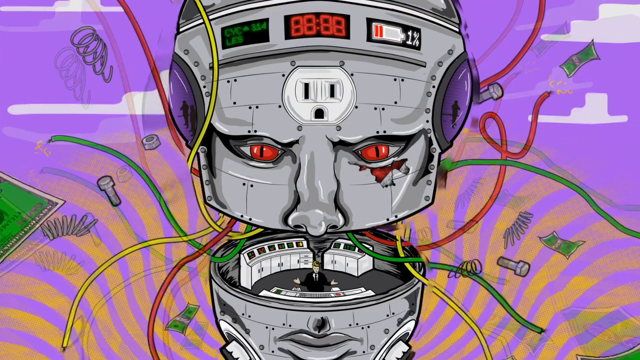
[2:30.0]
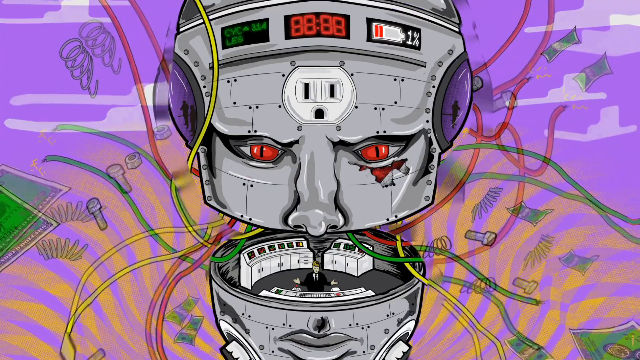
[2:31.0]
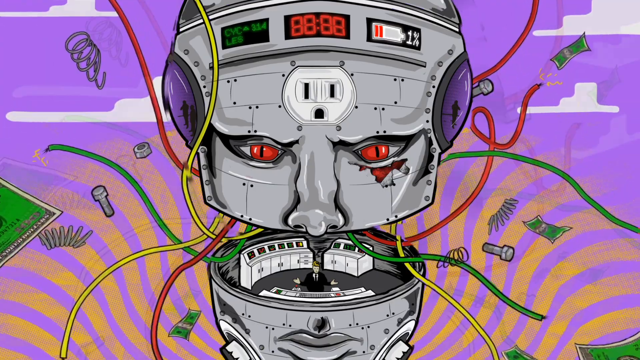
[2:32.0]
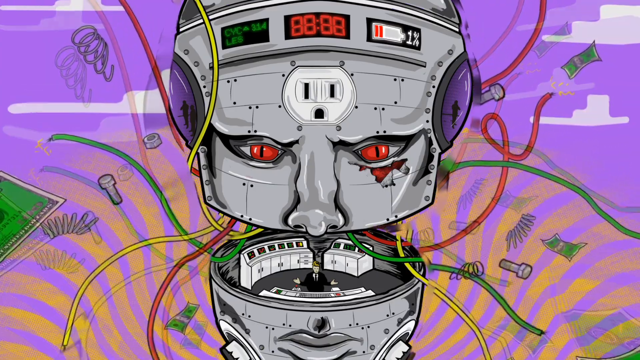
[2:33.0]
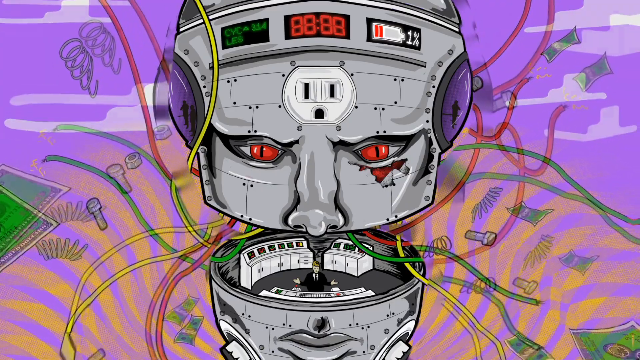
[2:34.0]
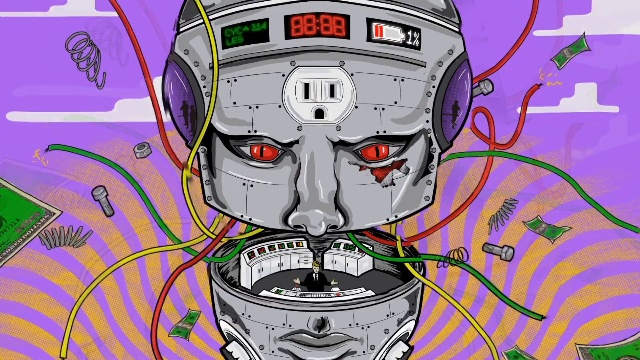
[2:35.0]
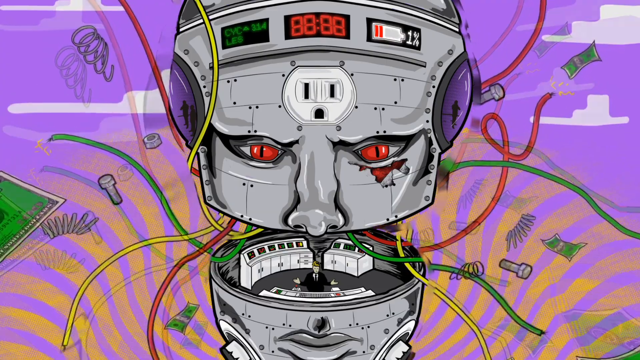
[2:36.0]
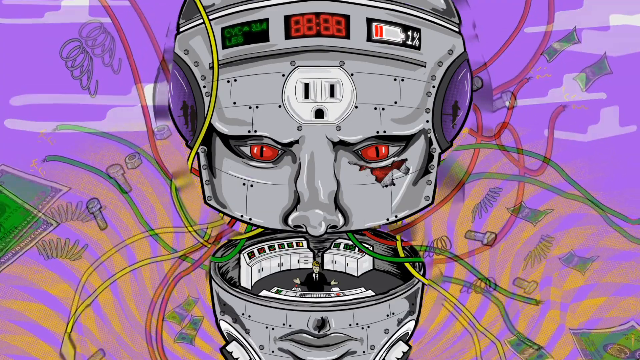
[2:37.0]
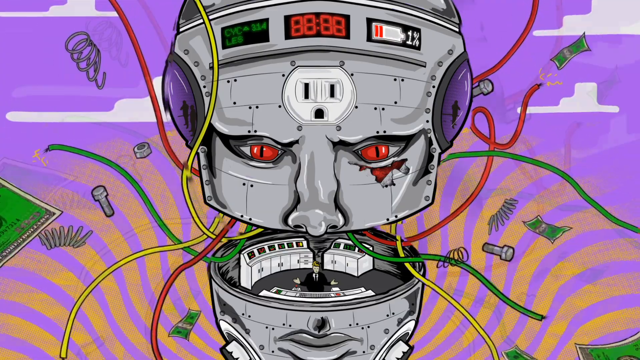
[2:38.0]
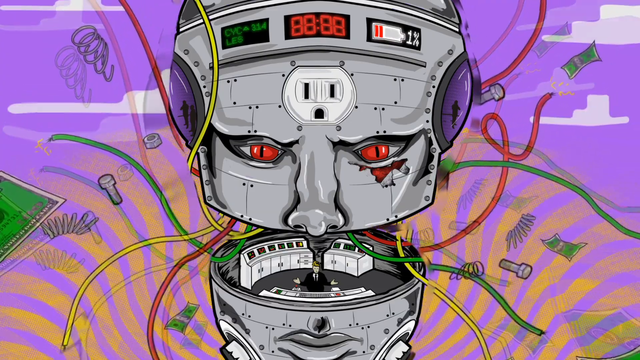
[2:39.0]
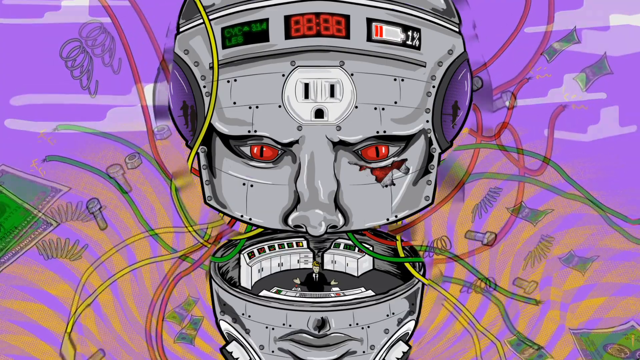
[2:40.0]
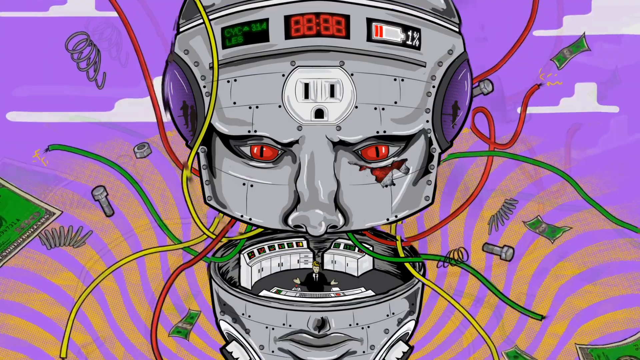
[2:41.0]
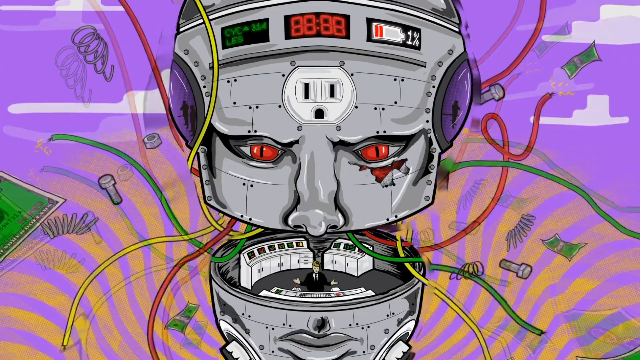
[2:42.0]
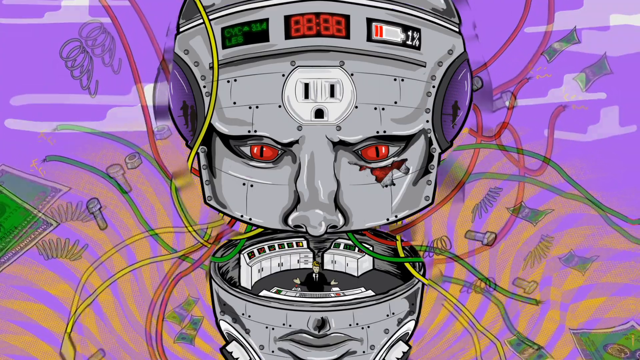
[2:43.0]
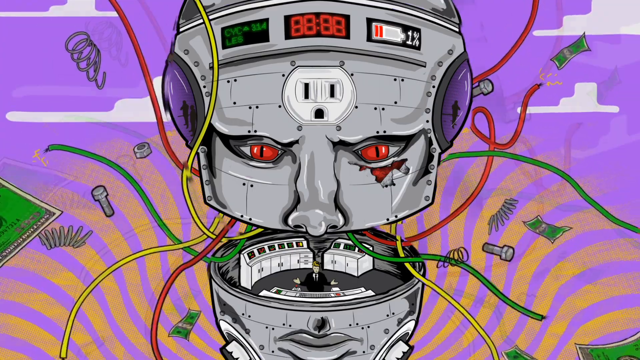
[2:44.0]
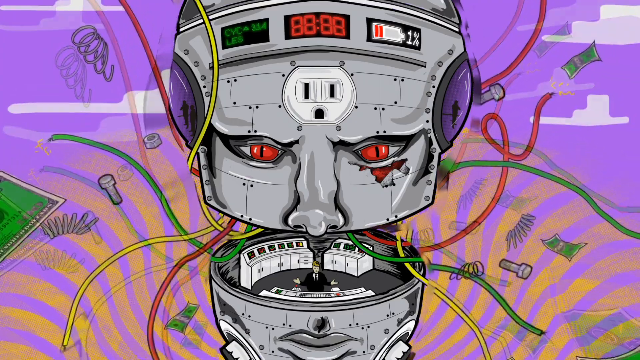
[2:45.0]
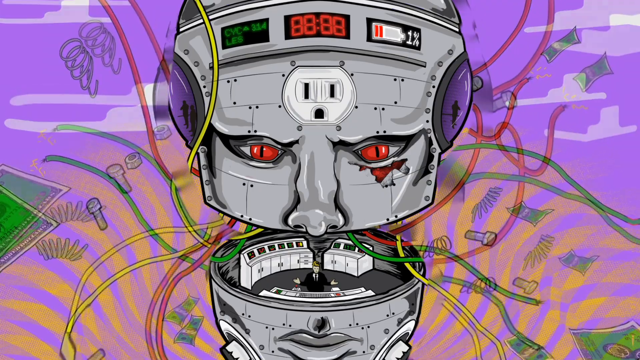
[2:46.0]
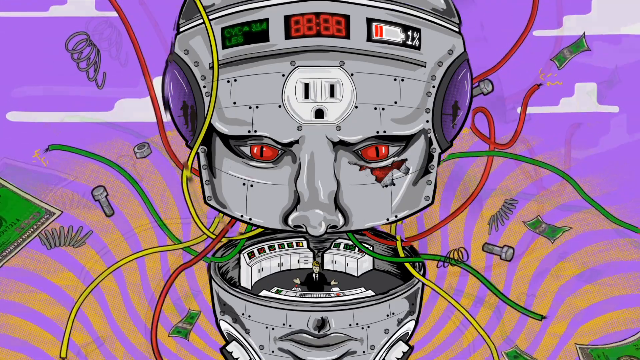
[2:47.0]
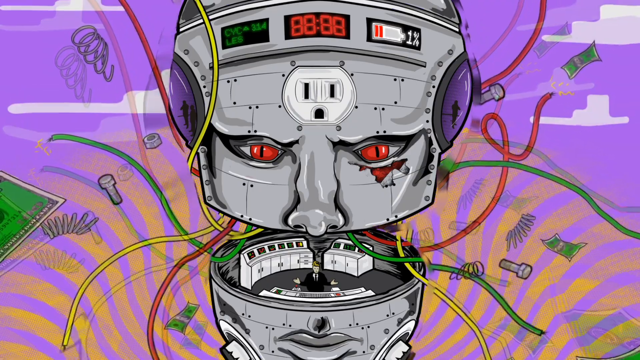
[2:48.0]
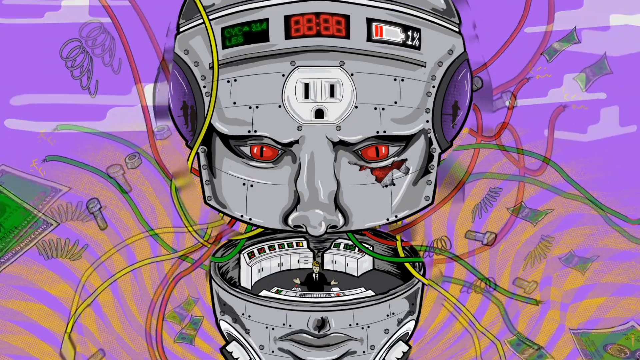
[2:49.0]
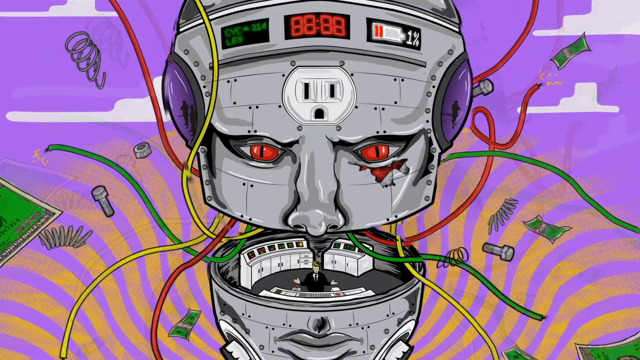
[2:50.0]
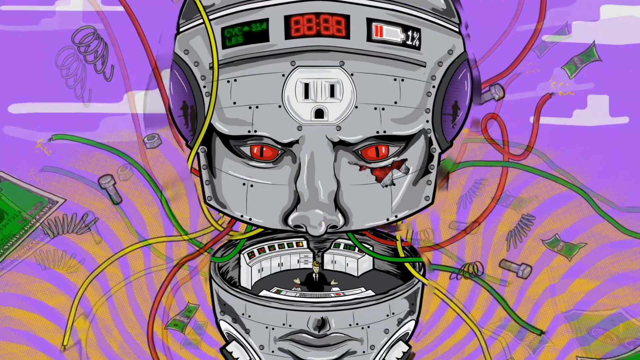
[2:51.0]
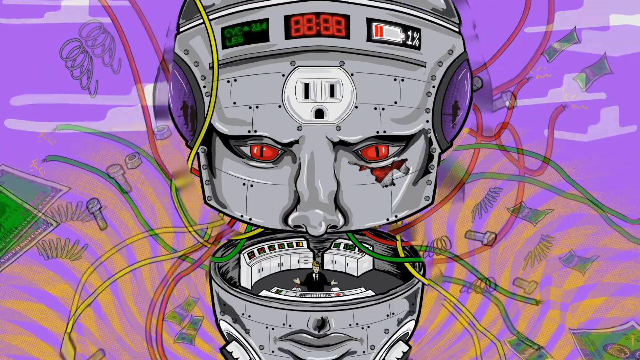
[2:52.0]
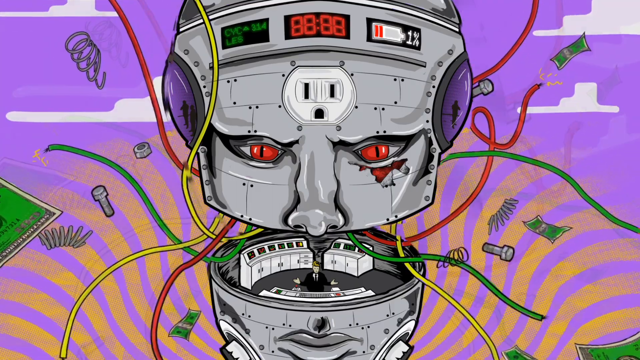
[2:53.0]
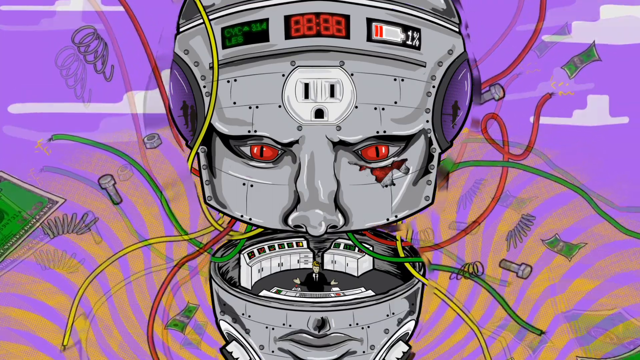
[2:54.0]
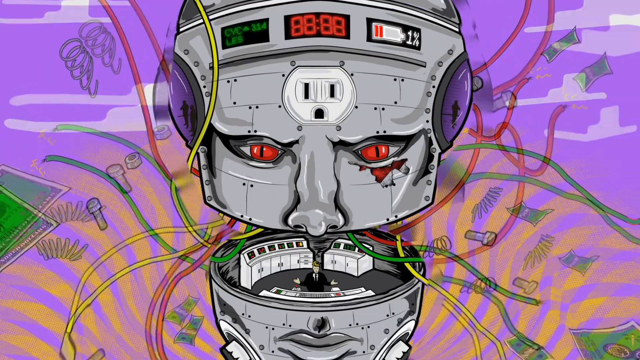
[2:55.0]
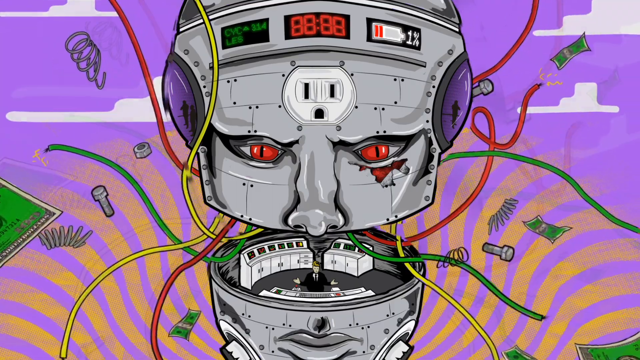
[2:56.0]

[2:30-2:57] A stationary robot head is in front of a moving purple background with white clouds, with yellow wavy lines moving counterclockwise behind the head and springs, bolts, washers and dollar bills moving in the same counterclockwise motion. The head is gray with red eyes and a red injury under its left eye. At the top of the head a clock reads "88,88", with a battery power indicator to its right showing only 1% battery power left and "314 cycles" to its left. The bottom of the head has a mouth, and between the top and bottom parts is a control room where a man in a black suit and black tie stands with his hands facing up. The machines in the control room are white and look like they would normally control the robot's movement. The head looks like it is coming apart, and maybe the whole robot is, given the flying springs and bolts and the electricity coming out of the wires.